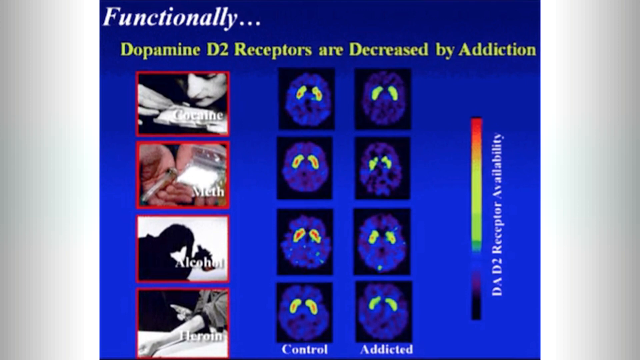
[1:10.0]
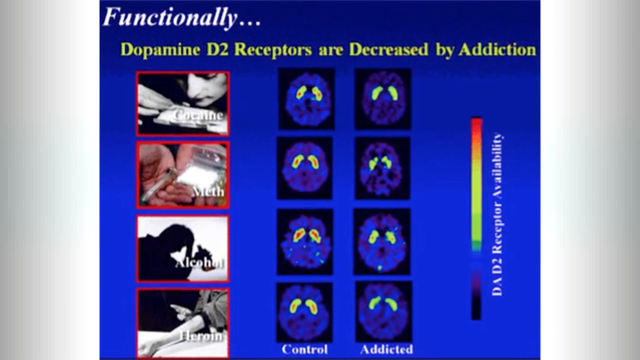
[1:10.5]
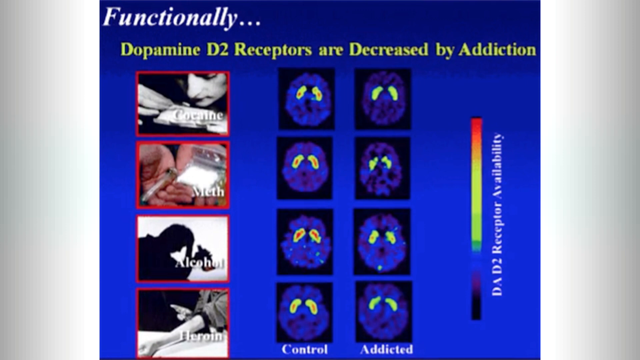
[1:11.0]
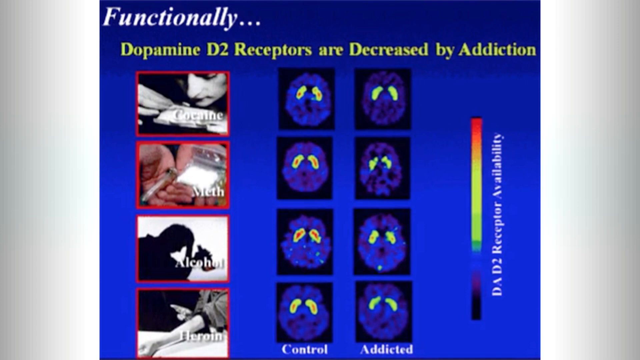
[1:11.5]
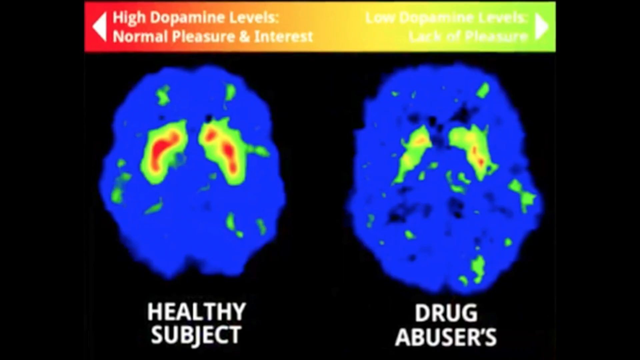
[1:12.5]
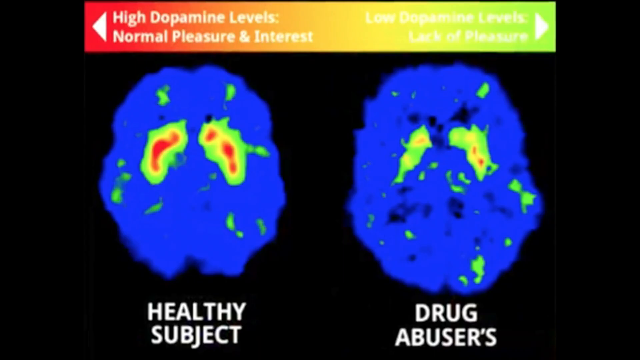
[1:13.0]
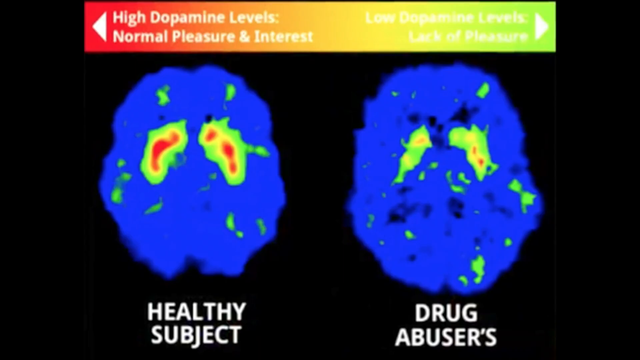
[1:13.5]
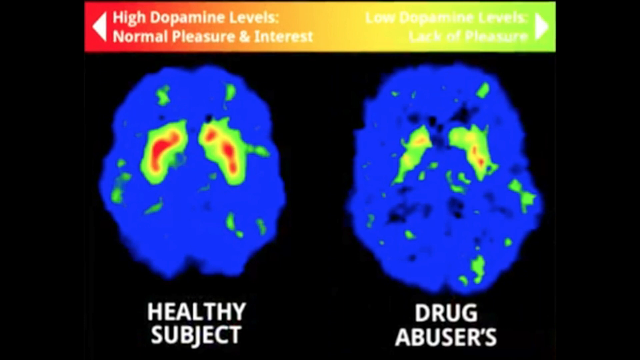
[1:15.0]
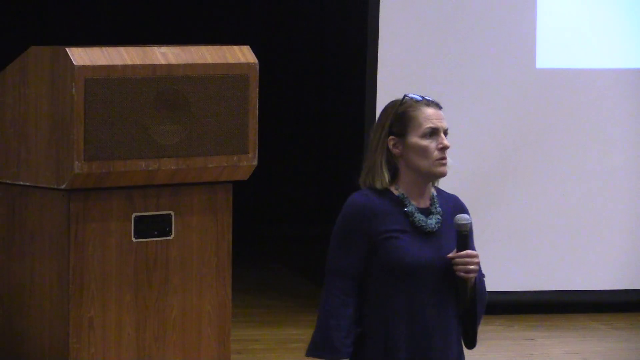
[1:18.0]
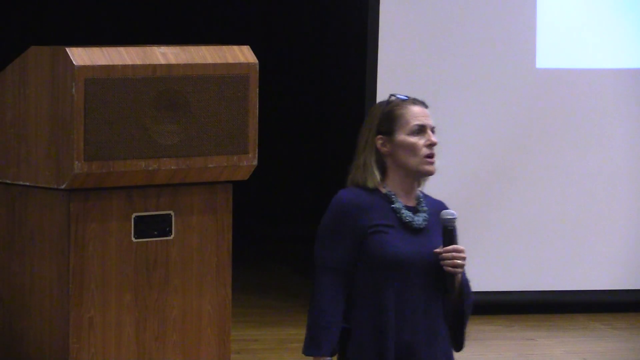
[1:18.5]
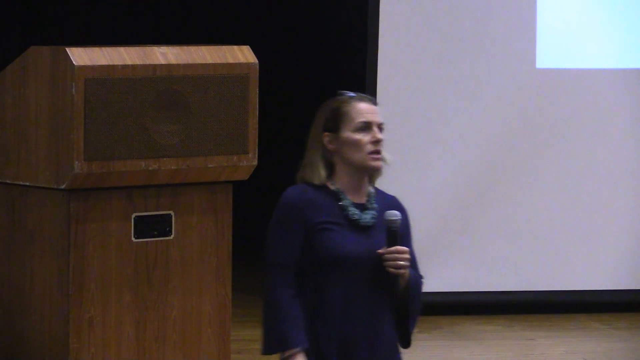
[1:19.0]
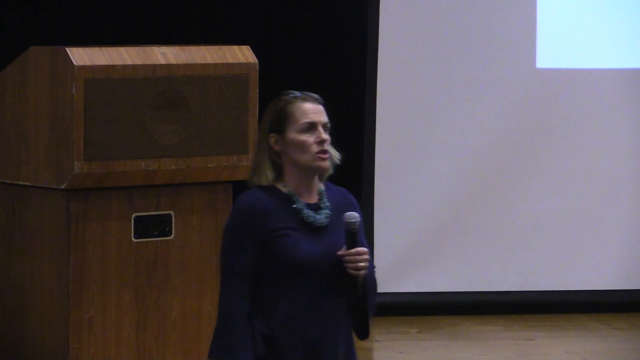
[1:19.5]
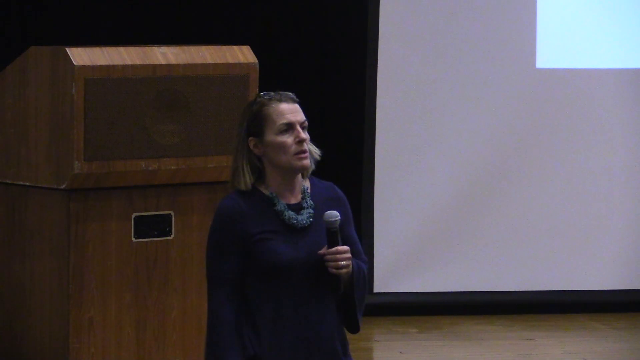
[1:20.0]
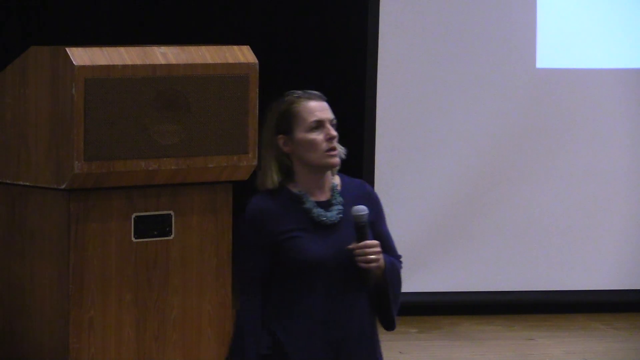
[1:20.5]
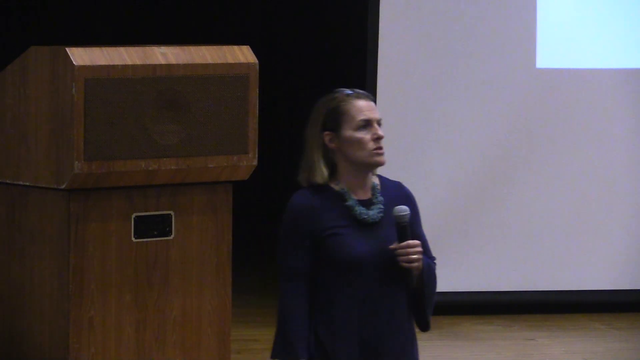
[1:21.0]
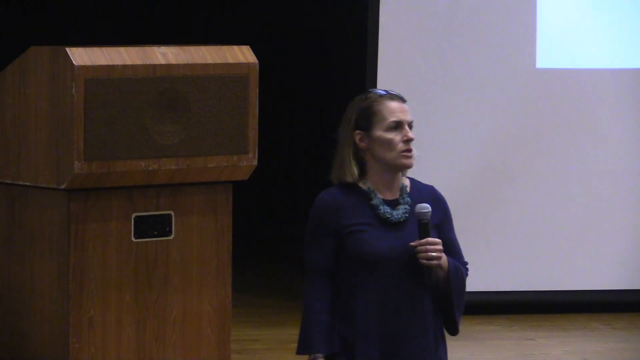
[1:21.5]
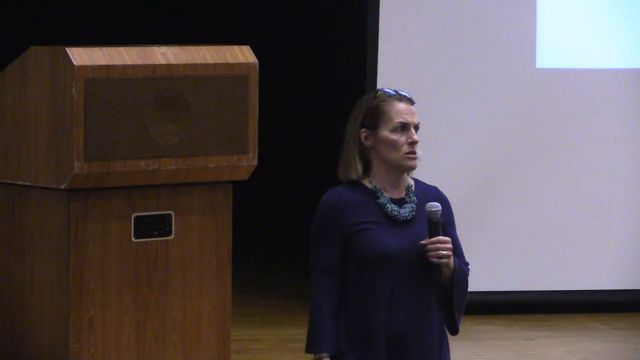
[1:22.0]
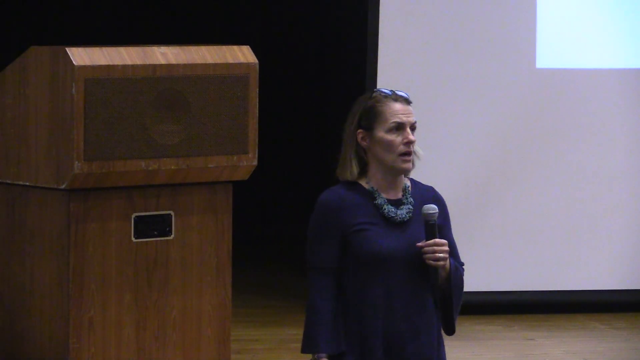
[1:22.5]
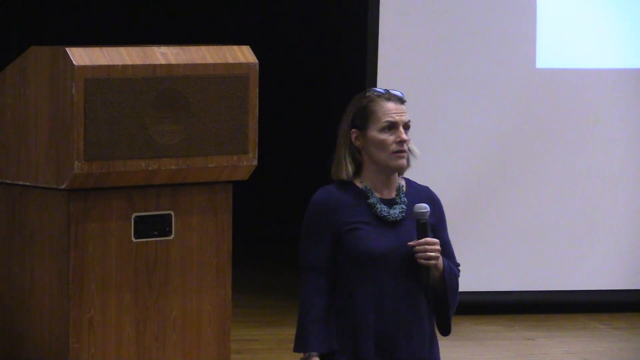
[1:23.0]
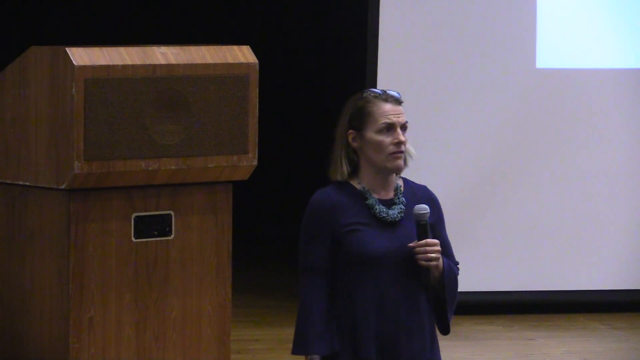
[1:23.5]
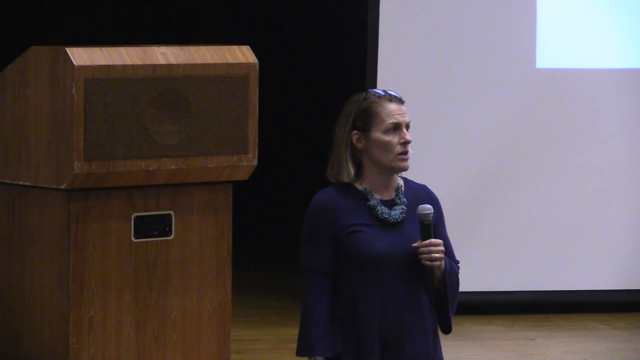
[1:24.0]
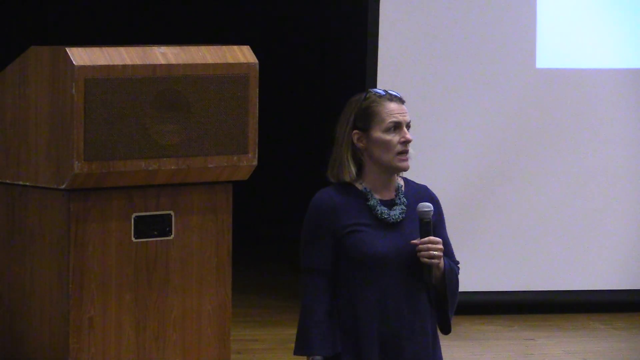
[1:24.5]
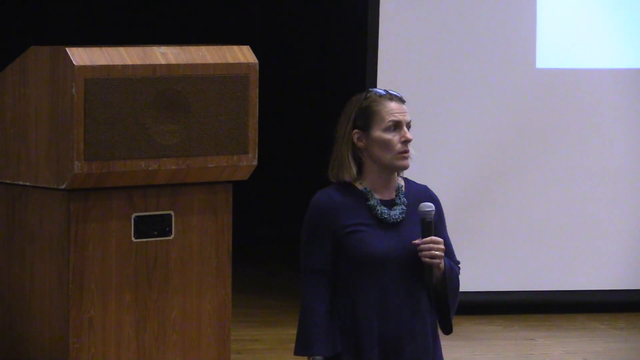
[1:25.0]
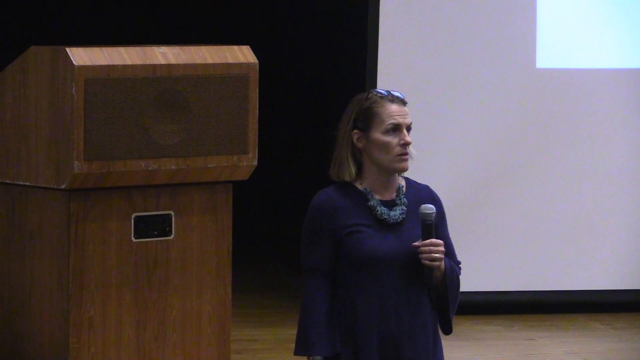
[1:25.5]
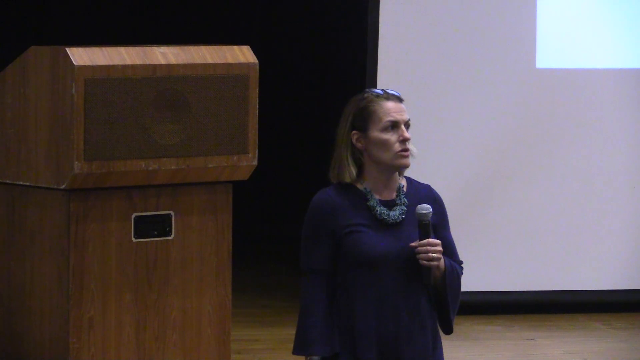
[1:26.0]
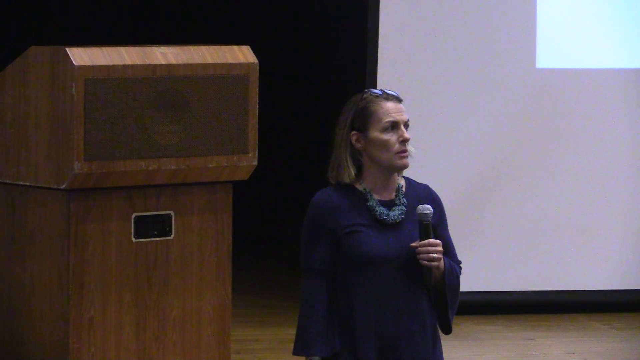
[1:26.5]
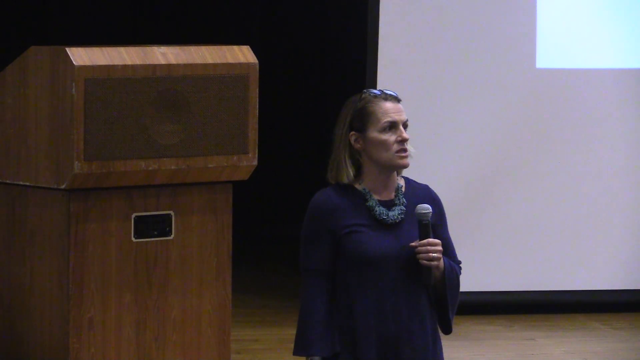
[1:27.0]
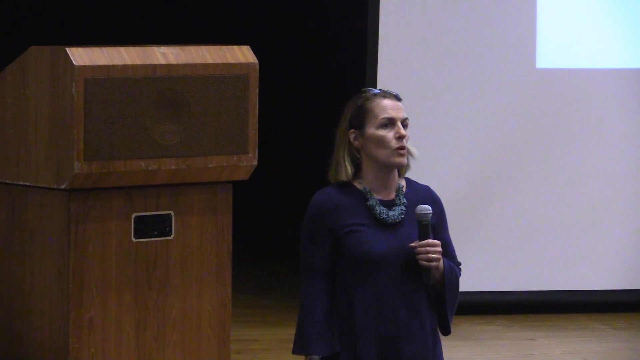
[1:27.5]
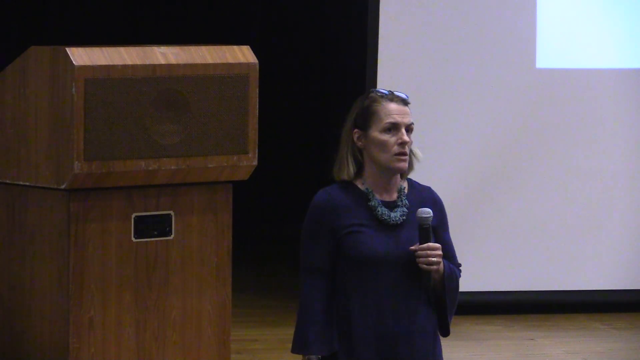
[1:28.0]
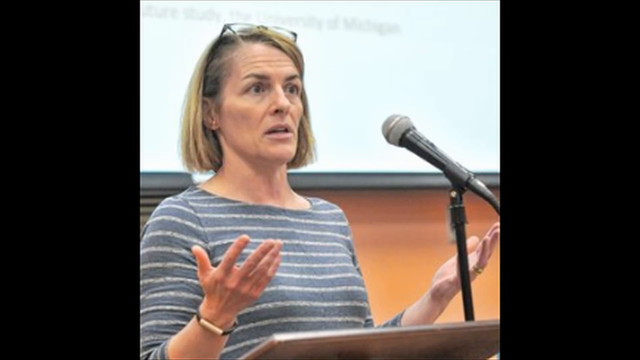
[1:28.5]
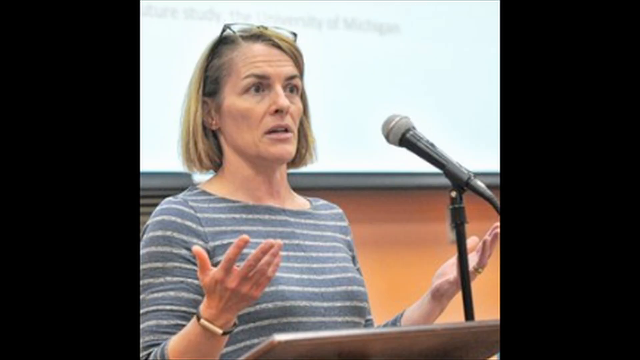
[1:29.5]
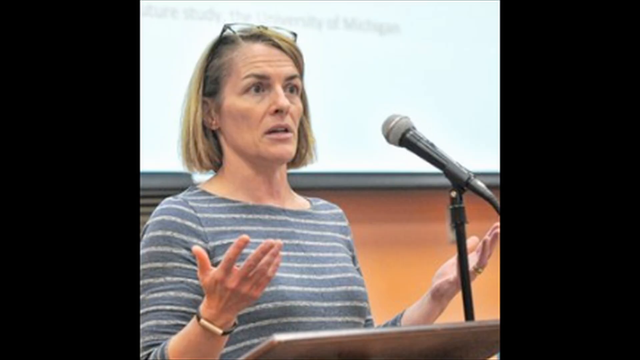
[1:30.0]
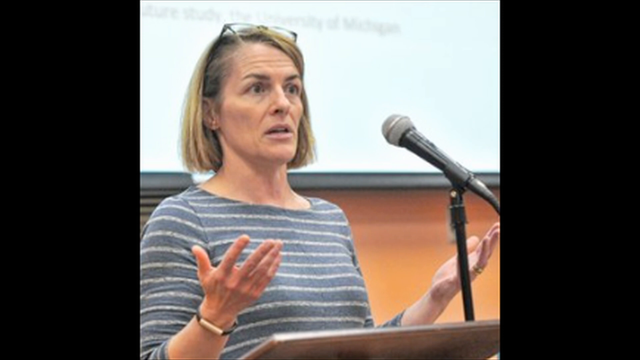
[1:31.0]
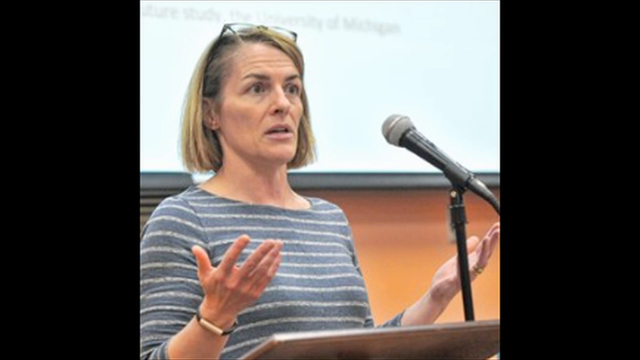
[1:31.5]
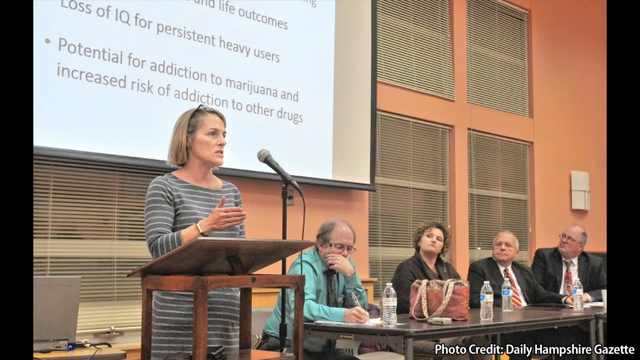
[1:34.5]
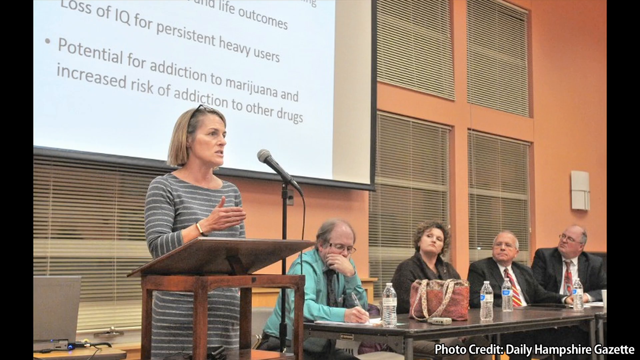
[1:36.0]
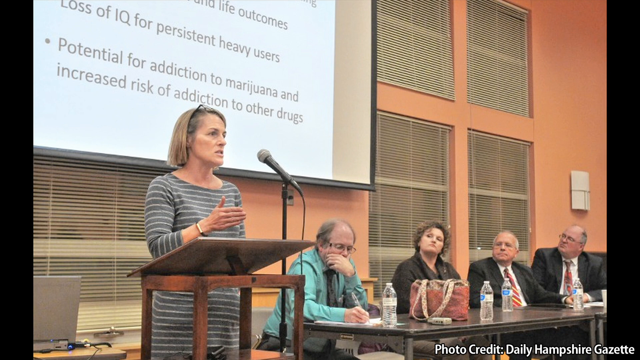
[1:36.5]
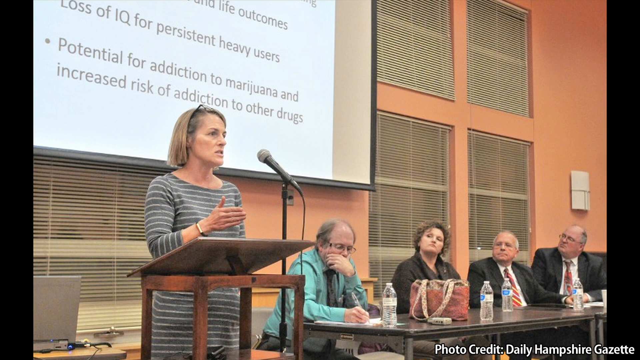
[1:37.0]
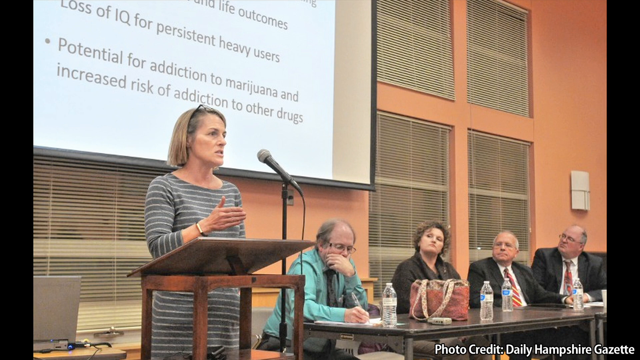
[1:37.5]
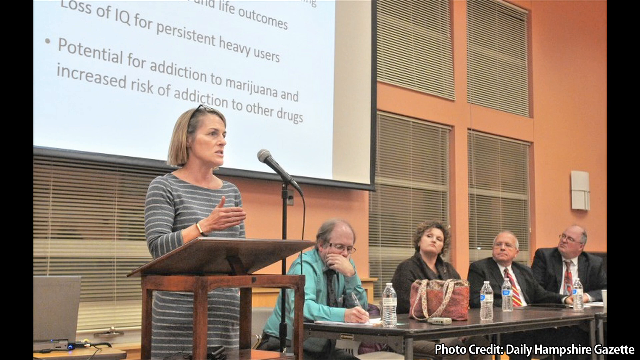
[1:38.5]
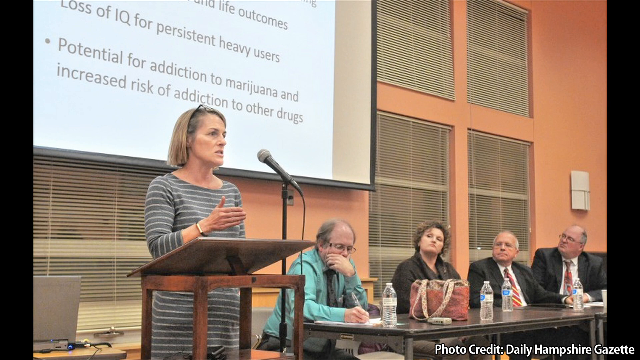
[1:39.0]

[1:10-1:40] A close-up of the brain MRIs shows a healthy subject on the left and the MRI brain scan of a drug abuser on the right. The healthy subject shows more high-intensity areas than the drug abuser, which is what the chart is meant to show. The video cuts back to the lecturer, who continues to make notes about it. It then cuts to the lecturer giving a speech in front of what looks like a panel of other doctors. A projector screen in the back shows two bullet points: one says "the loss of IQ for persistent heavy users" and the other says "potential for addiction to marijuana and increased risk of addiction to other drugs." As she continues her lecture in front of the other panelists, she wears a striped shirt and is no longer holding the microphone, which is on the stand in front of her.